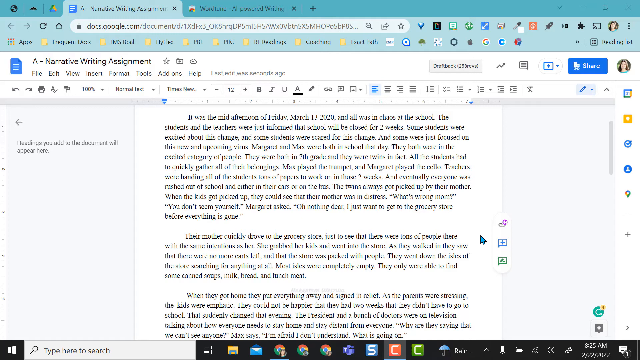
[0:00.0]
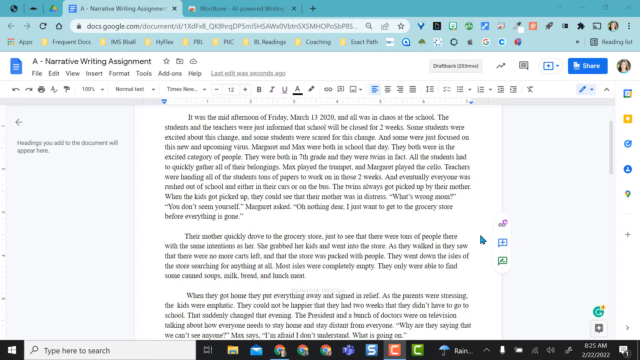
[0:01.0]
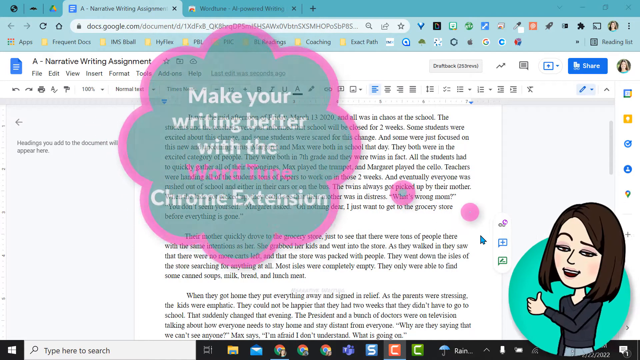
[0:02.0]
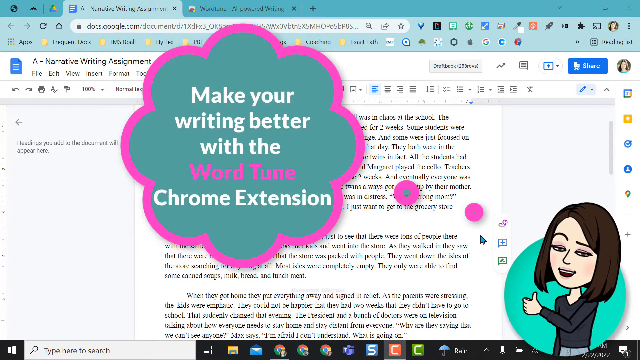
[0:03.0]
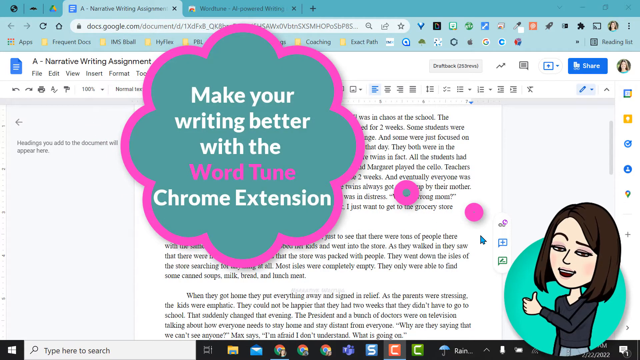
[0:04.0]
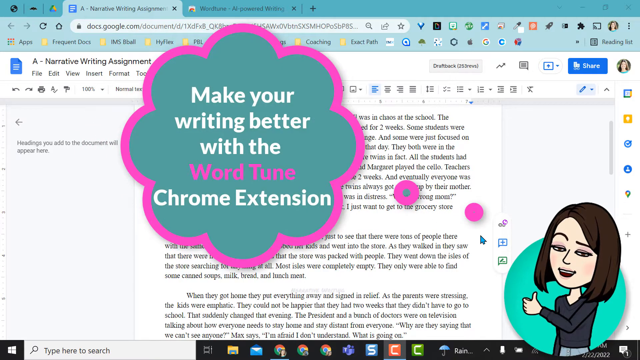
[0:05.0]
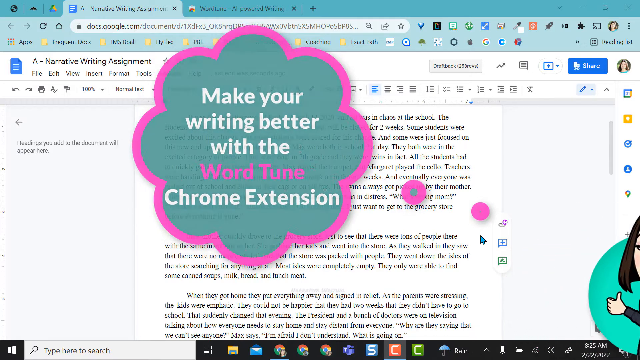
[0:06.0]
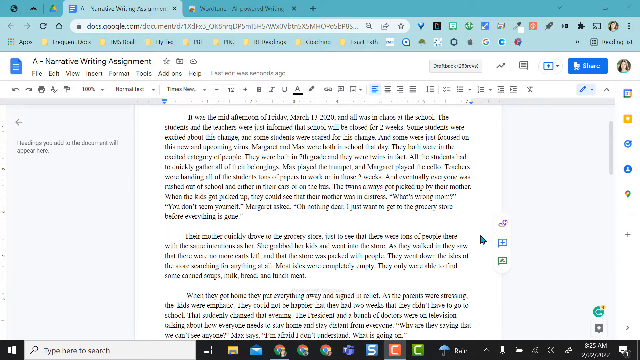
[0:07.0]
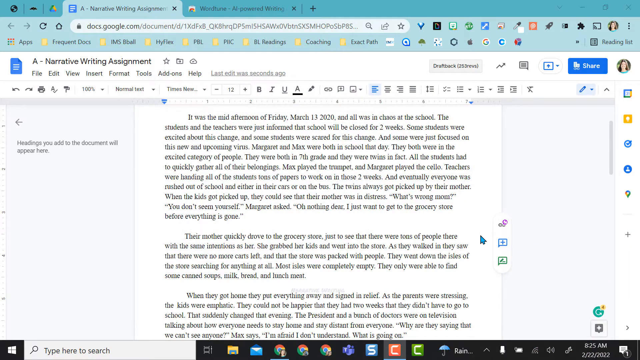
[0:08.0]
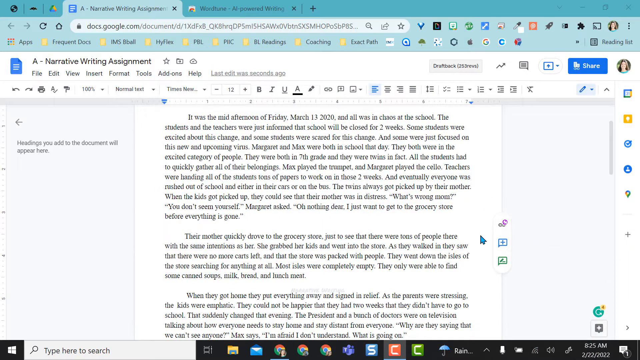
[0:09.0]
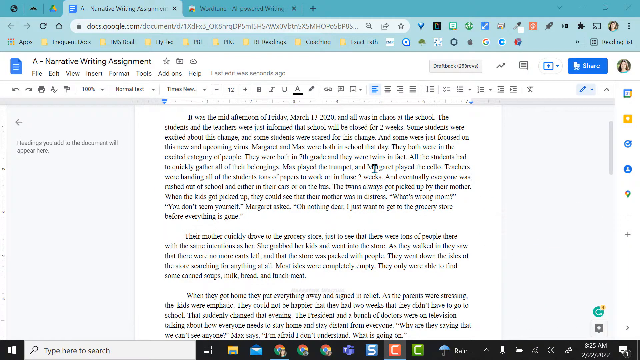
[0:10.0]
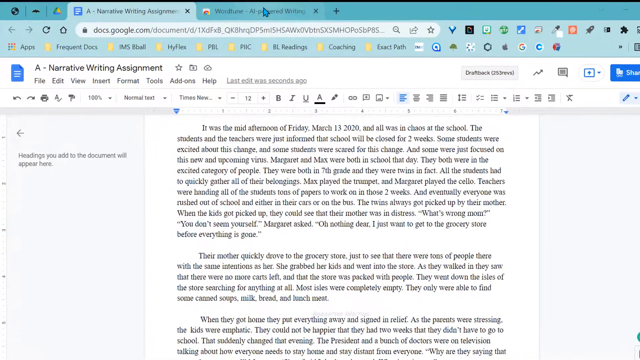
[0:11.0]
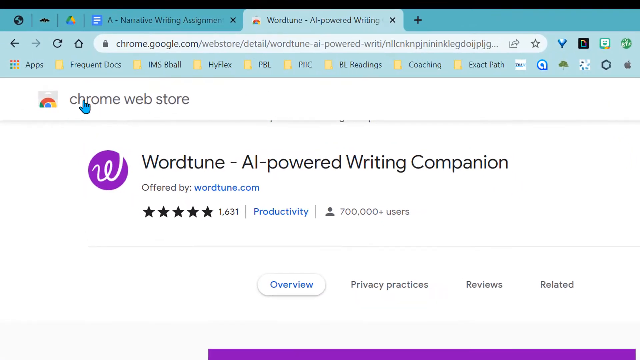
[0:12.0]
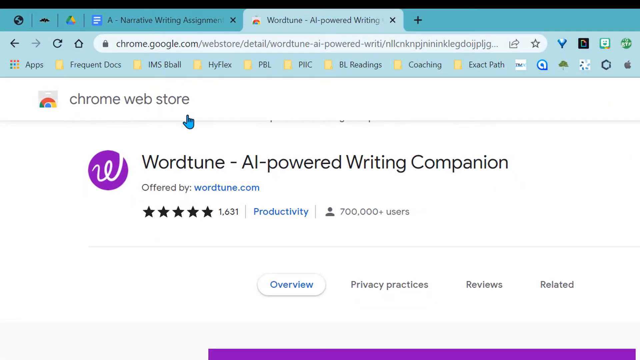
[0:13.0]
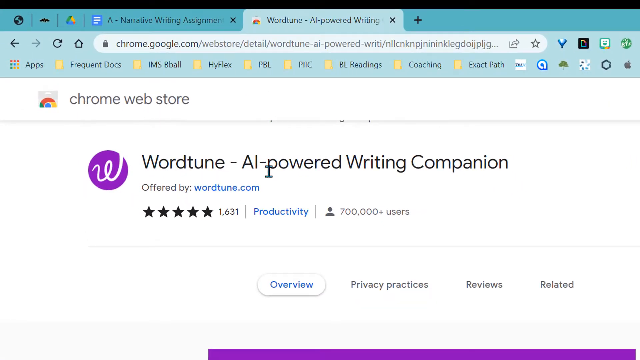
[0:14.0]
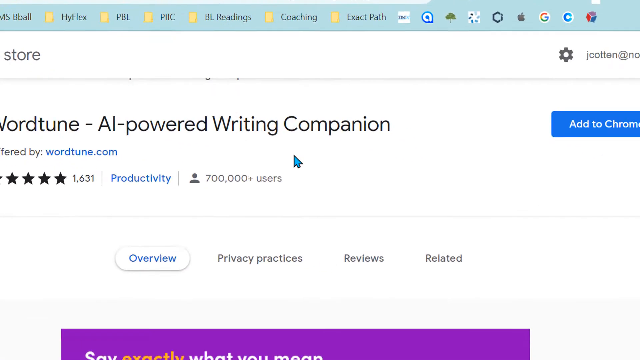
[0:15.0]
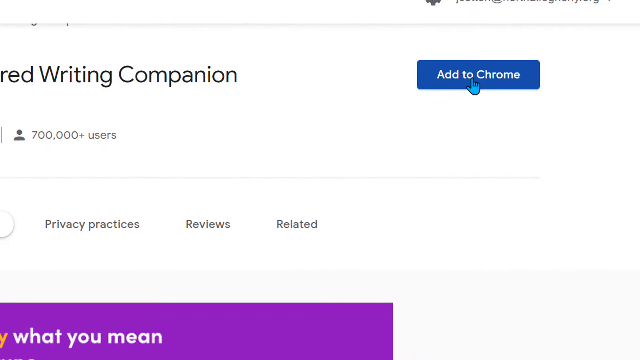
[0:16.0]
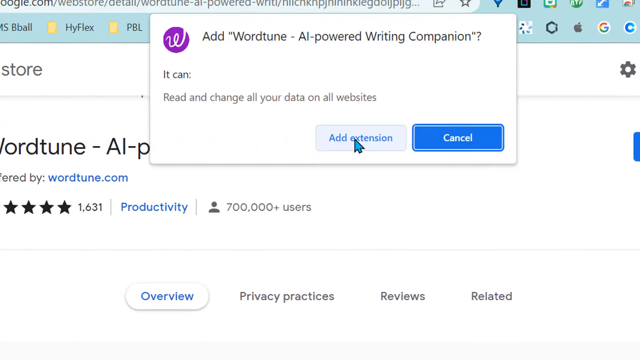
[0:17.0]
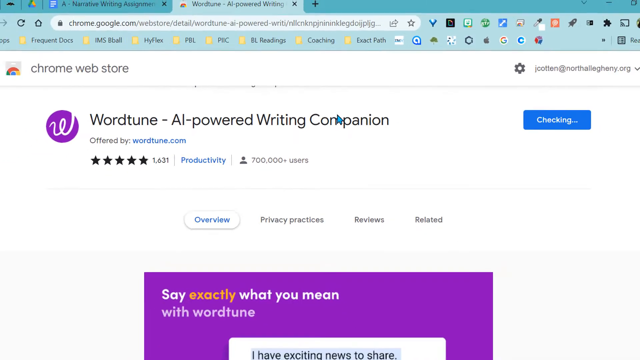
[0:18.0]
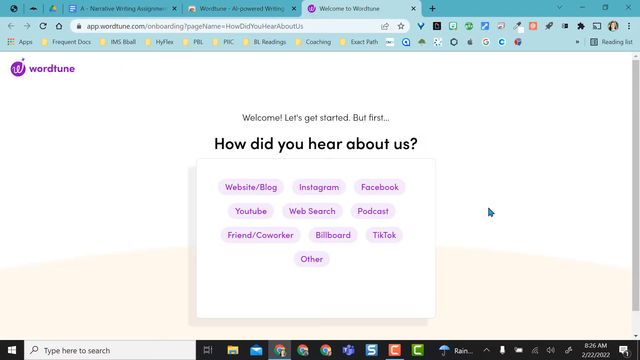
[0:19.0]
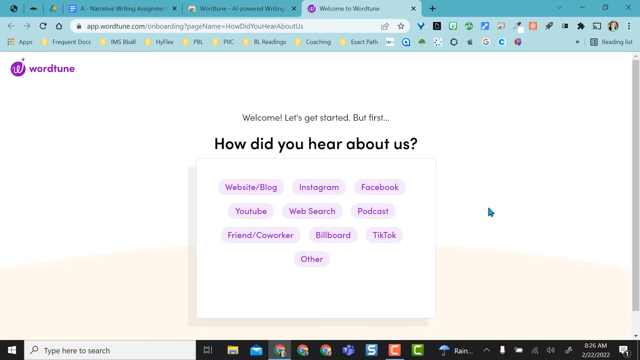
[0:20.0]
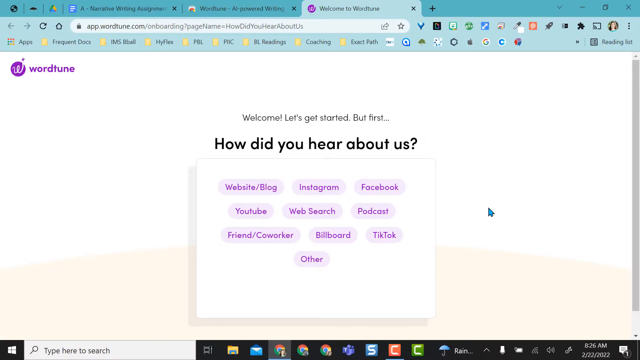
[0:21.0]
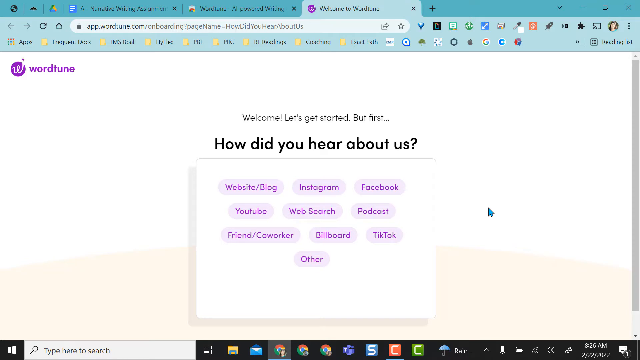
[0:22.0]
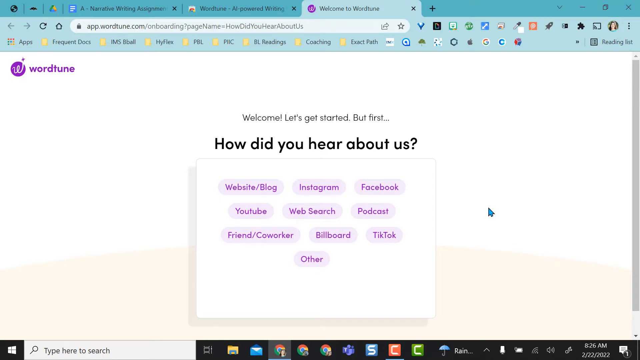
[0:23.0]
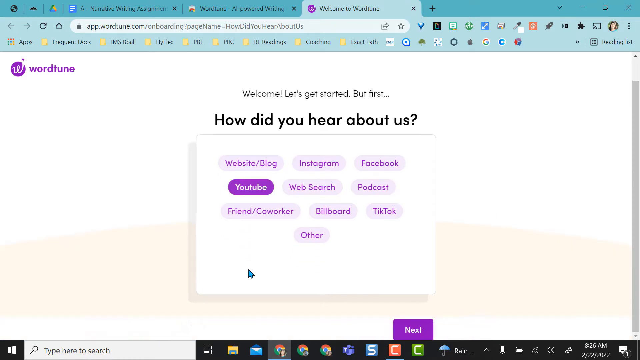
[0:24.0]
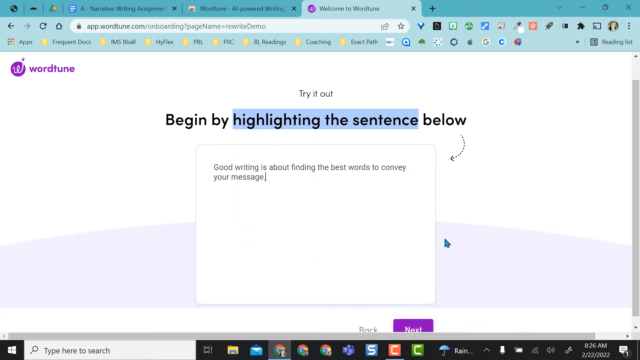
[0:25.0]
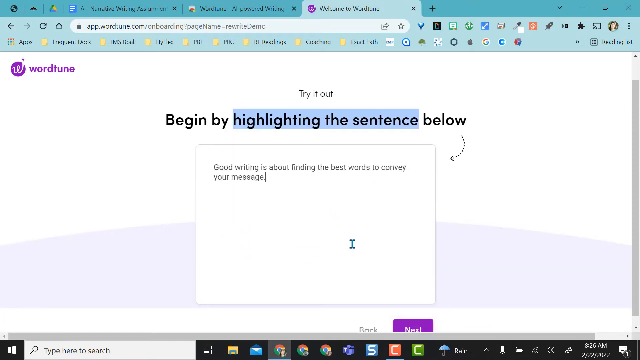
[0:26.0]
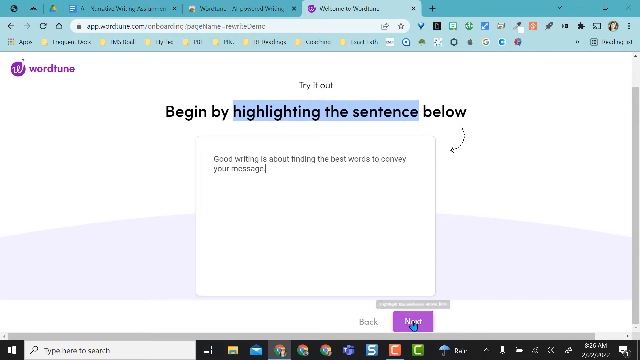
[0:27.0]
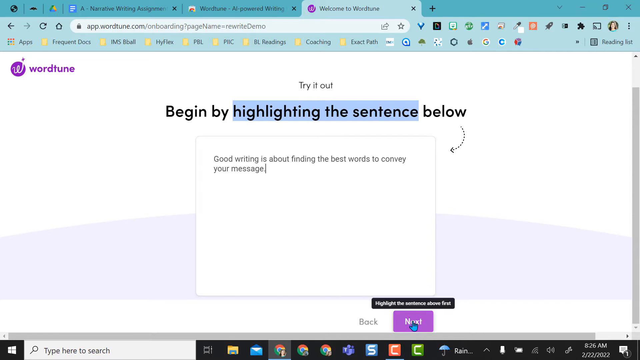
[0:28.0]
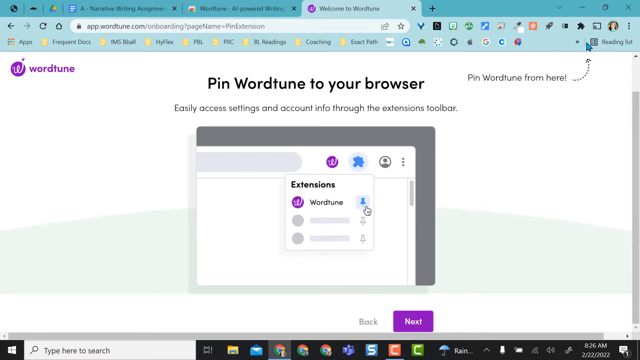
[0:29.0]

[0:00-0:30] A text editor is on the screen with a label indicating a narrative writing assignment. A pop-up then appears stating "Make your writing better with WordTune Chrome extension," along with a logo for the extension showing a woman holding her thumb up. The advertisement then leaves the screen, revealing the narrative assignment, which is in a Word document. The user switches to another tab showing the WordTune AI extension, clicks on Add extension to Chrome, and confirms the addition. A page then asks "How did you hear about the application?" with 10 different selections, and the user selects YouTube. The writing document has a standard white background with relatively small font.